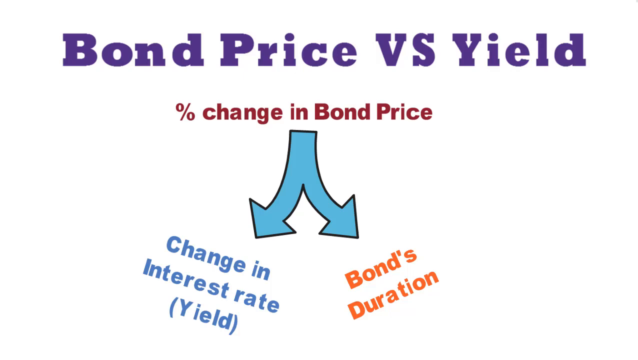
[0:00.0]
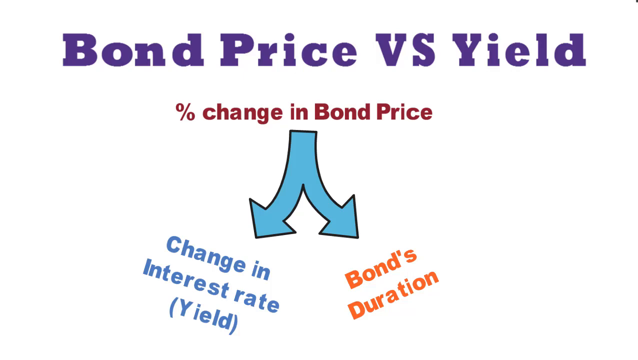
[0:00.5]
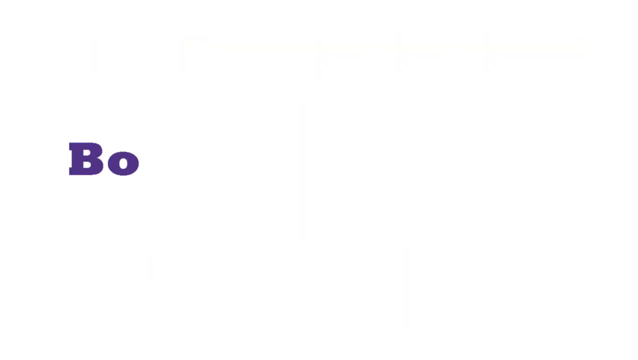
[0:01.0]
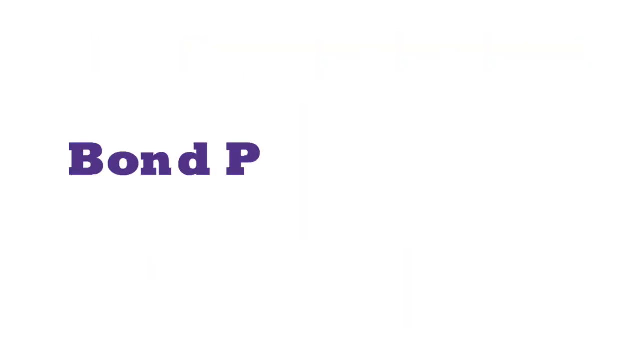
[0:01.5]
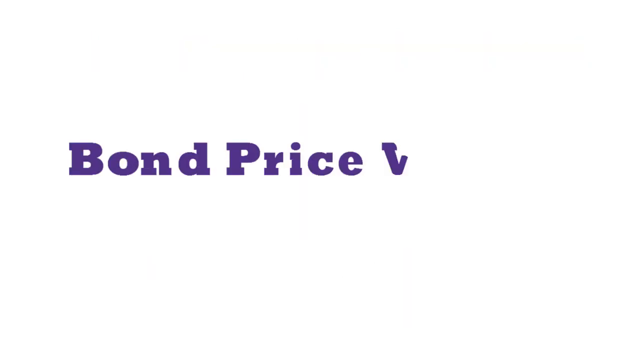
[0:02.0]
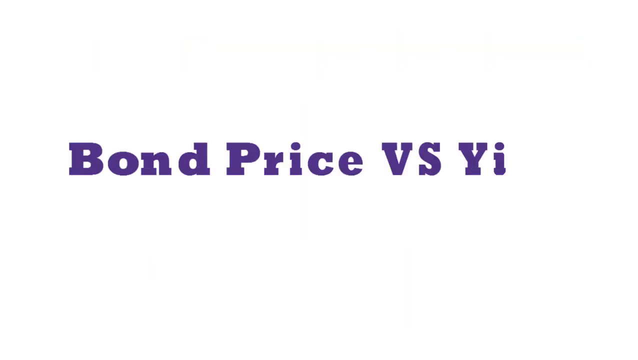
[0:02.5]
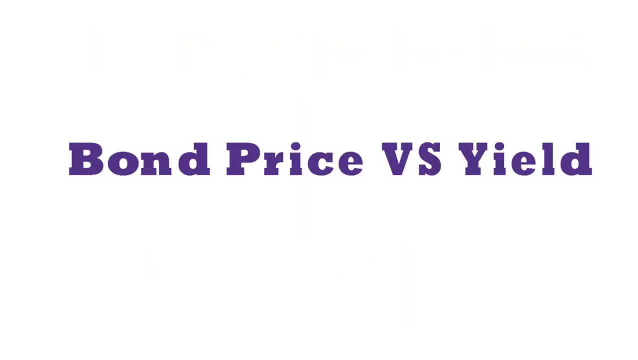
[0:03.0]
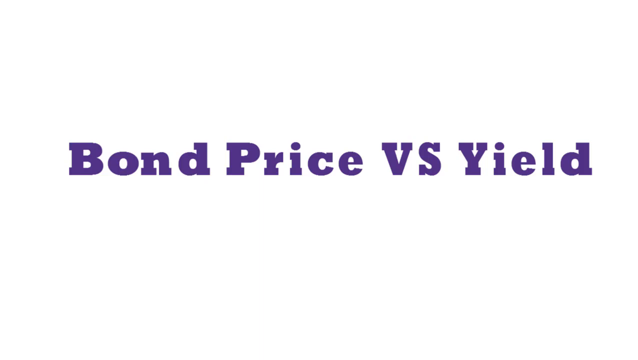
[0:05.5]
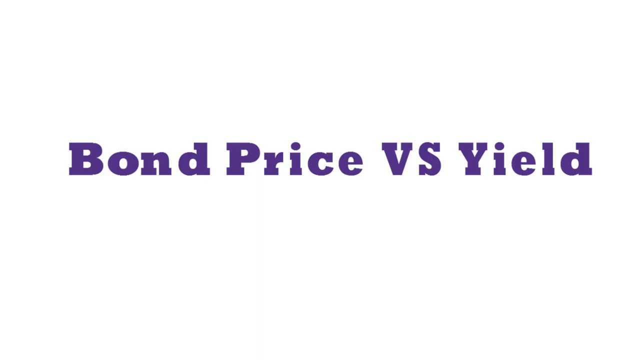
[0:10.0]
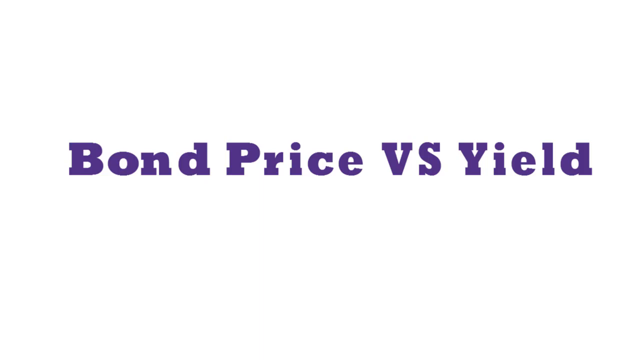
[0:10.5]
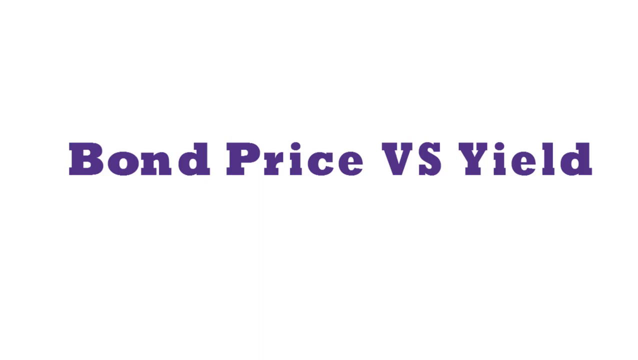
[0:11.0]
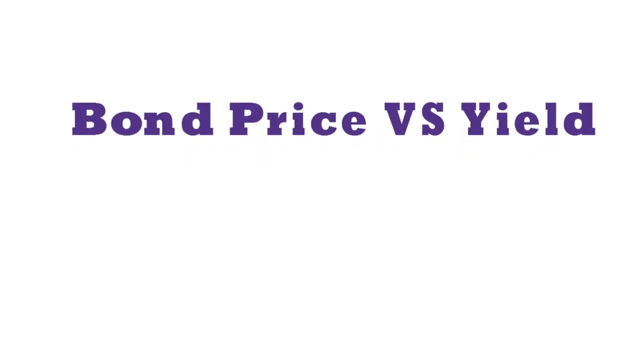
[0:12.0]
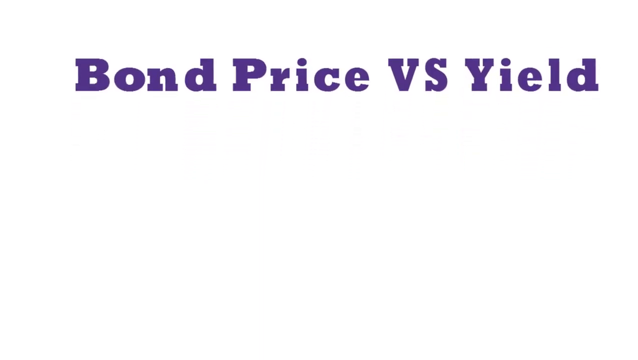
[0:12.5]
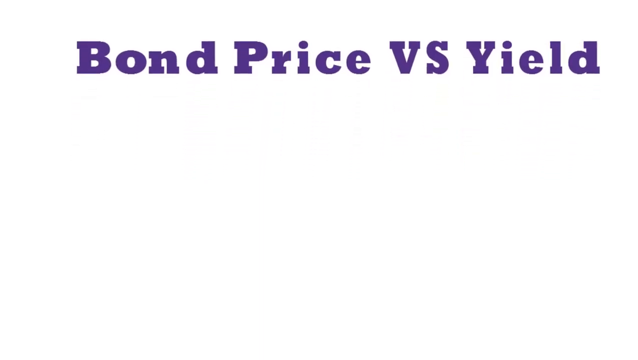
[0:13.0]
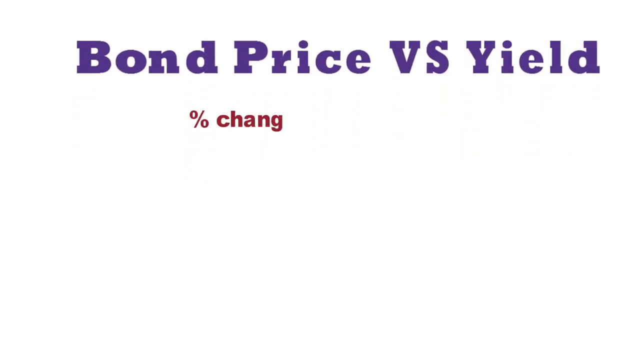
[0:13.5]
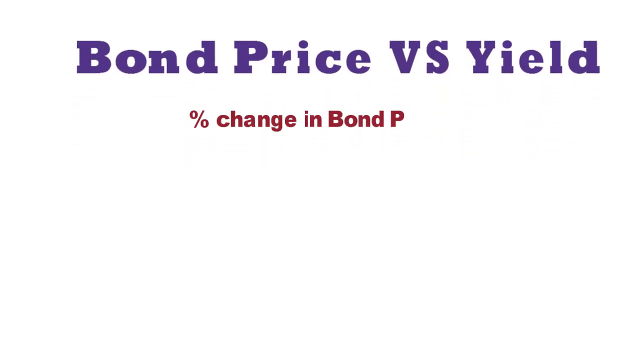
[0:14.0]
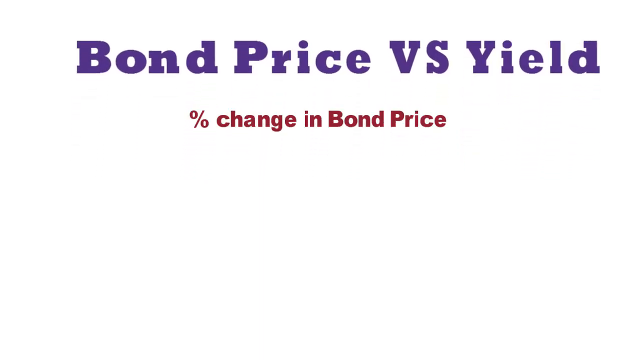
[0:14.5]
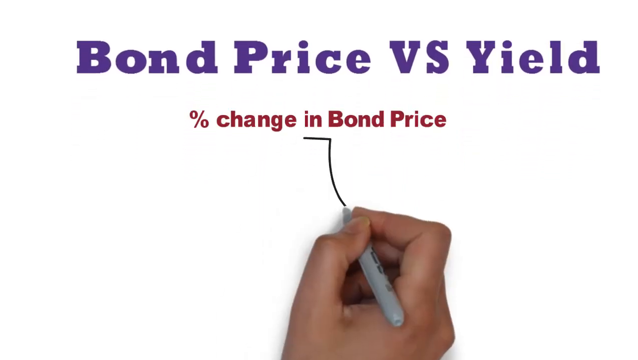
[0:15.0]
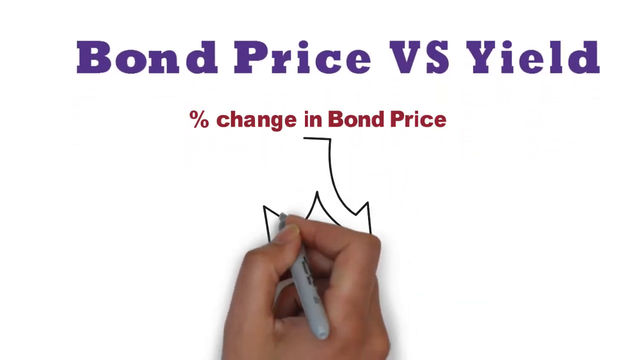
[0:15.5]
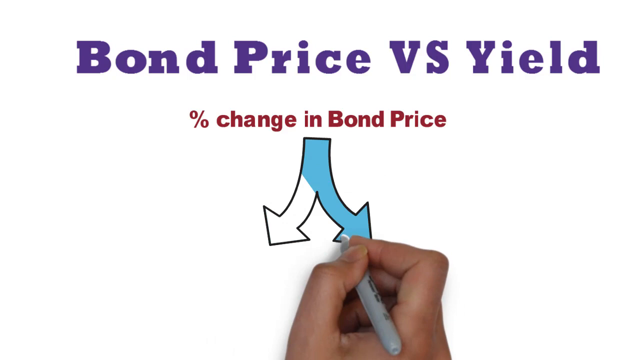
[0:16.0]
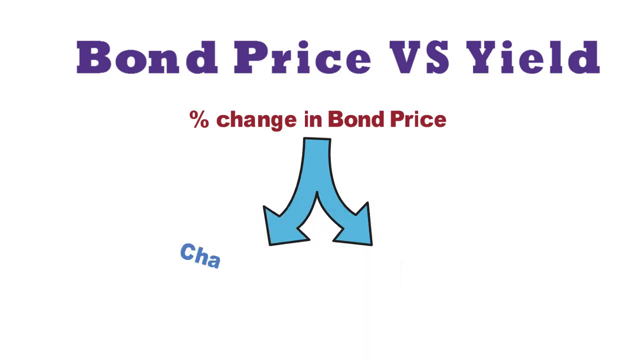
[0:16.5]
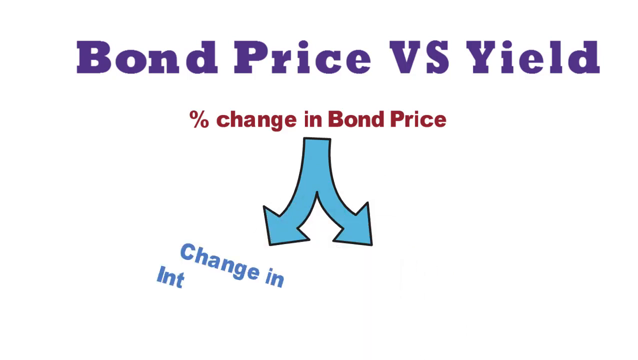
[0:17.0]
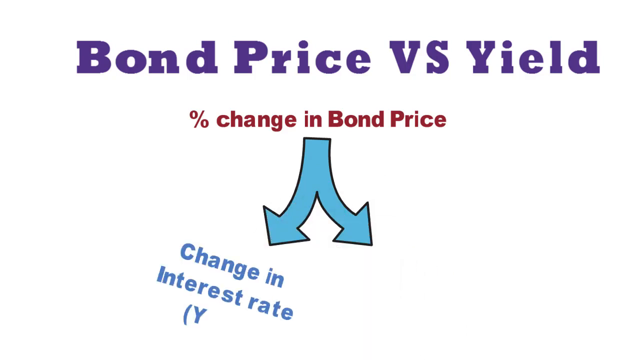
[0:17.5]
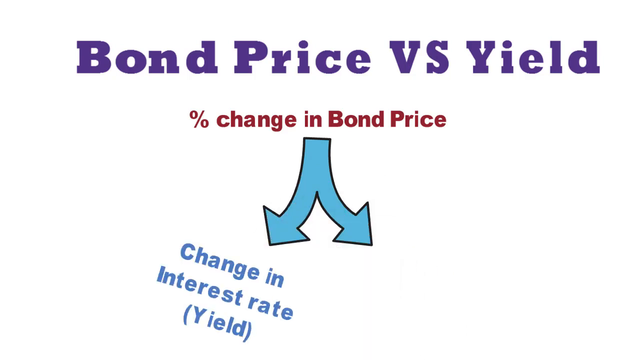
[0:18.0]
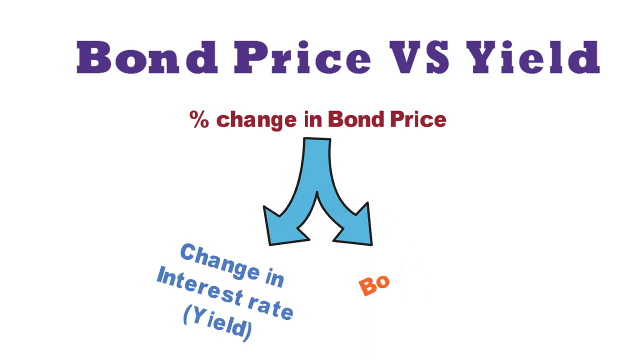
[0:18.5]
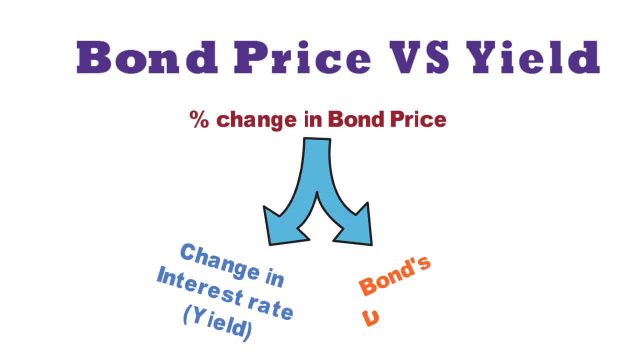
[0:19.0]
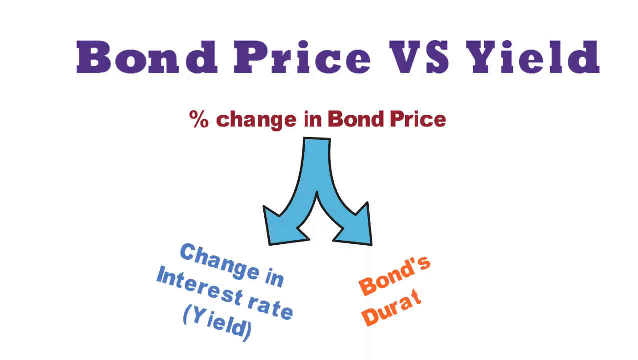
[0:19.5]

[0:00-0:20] A white screen shows the title "Bond Price vs. Yield" in large purple text at the top. Red text underneath represents the percent change in bond prices. A hand holding a sharpie draws two arrows pointing in two different directions, representing the change in interest rate yield and the bond's duration, in a very simple depiction of this sort of bond-related information. There is blue and orange text on each side of the arrow. No people or animals appear, and the setting stays on this white page.